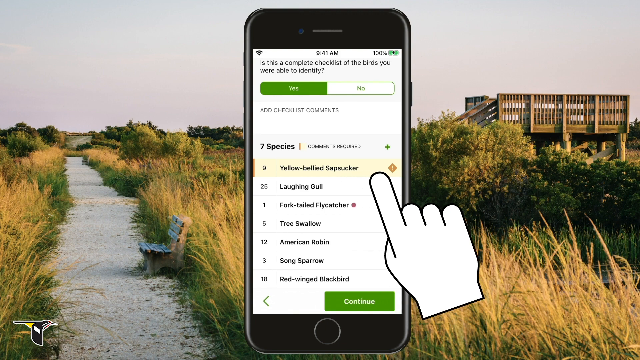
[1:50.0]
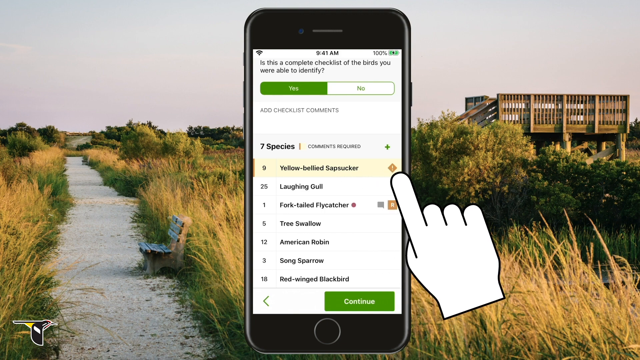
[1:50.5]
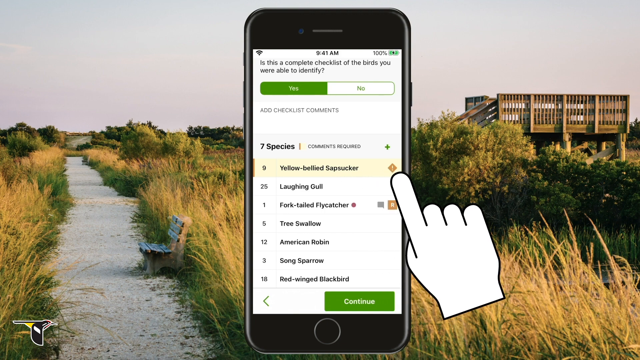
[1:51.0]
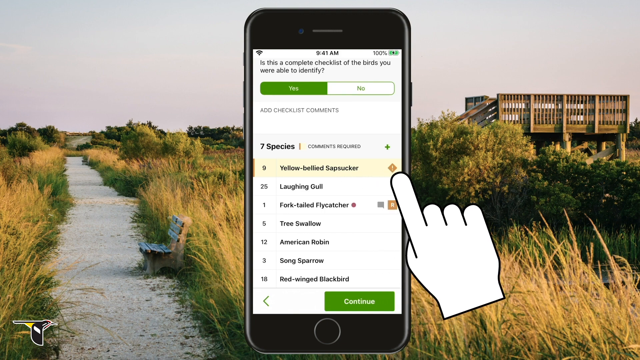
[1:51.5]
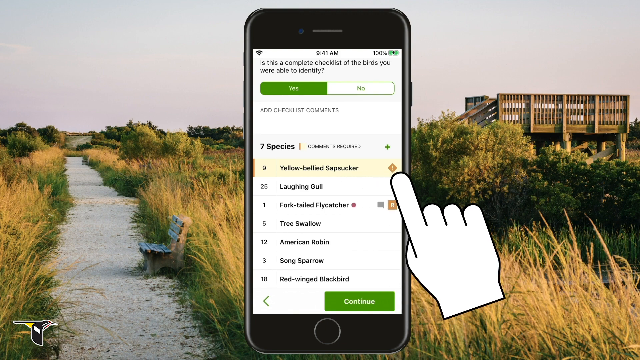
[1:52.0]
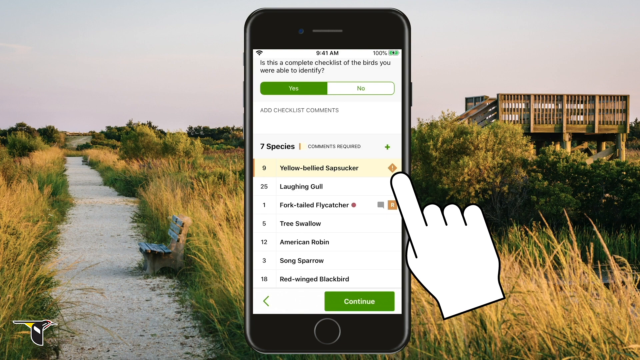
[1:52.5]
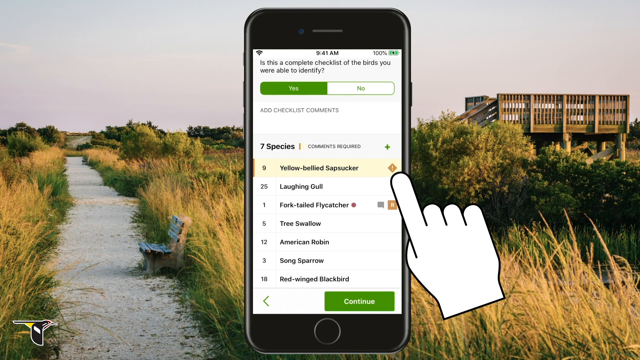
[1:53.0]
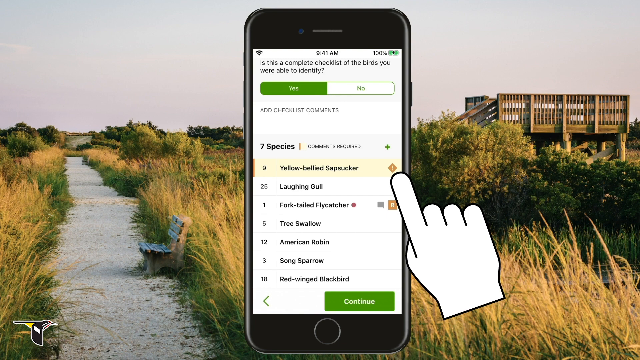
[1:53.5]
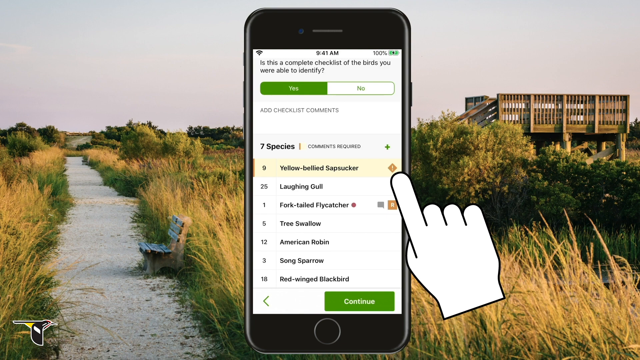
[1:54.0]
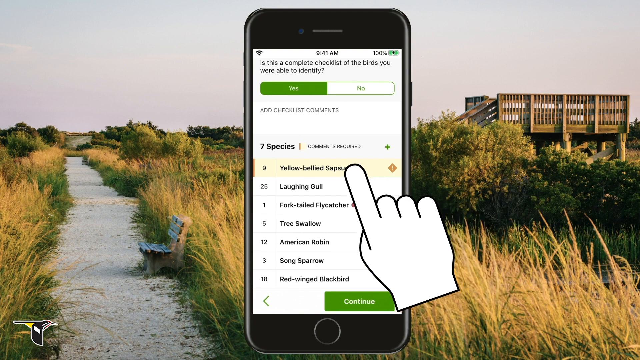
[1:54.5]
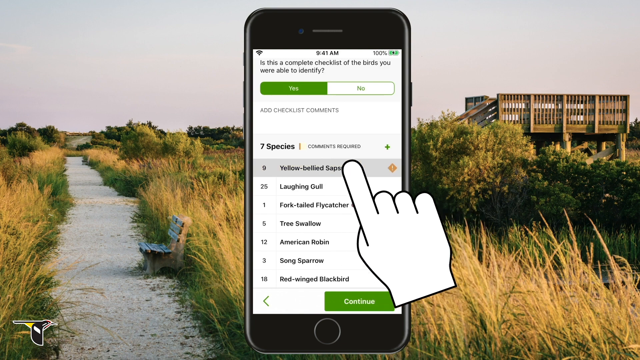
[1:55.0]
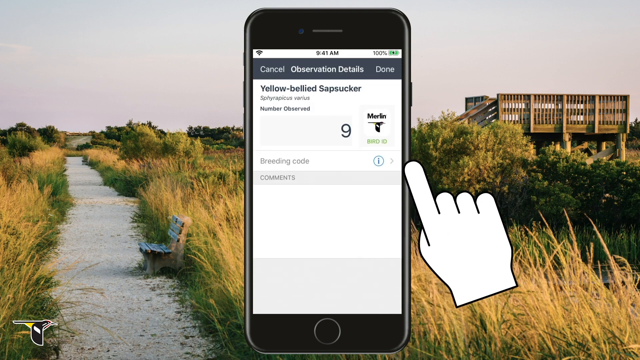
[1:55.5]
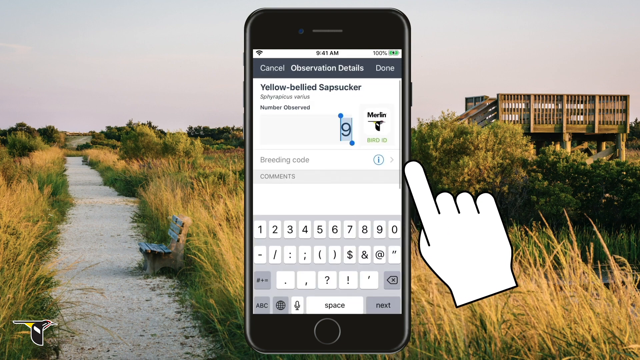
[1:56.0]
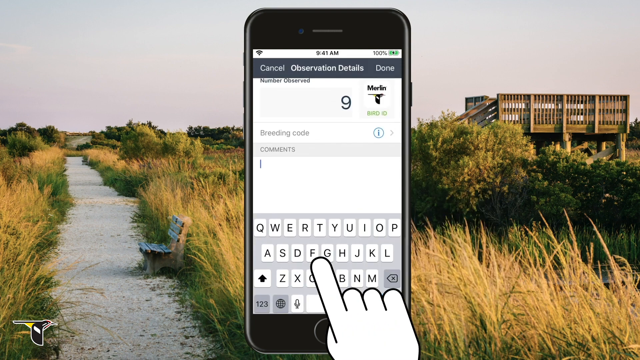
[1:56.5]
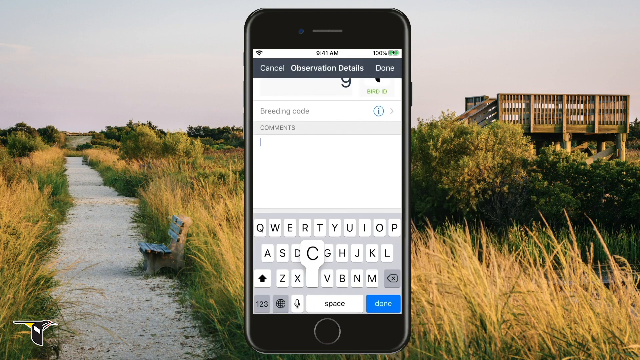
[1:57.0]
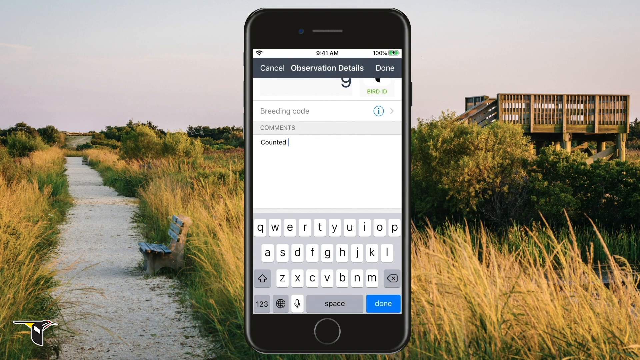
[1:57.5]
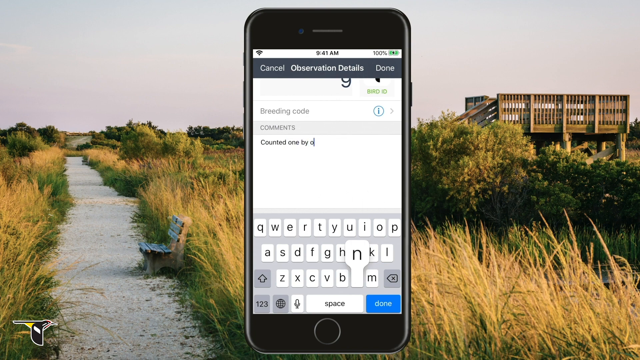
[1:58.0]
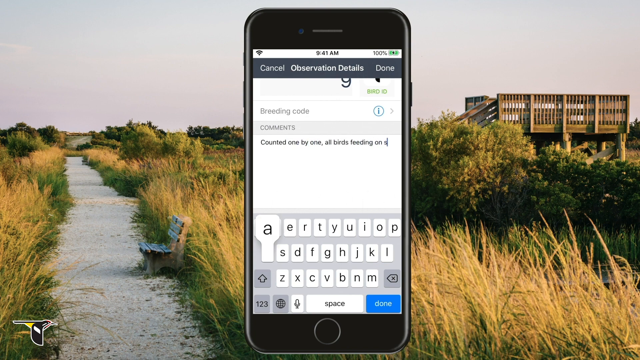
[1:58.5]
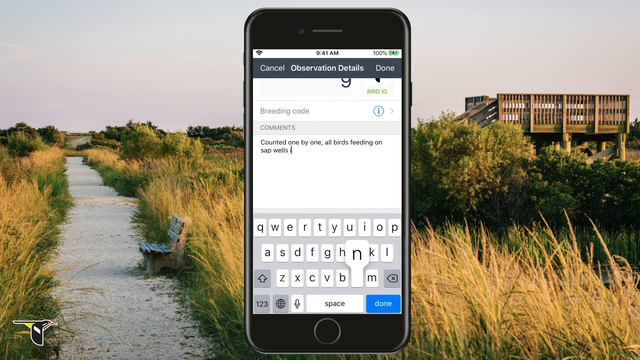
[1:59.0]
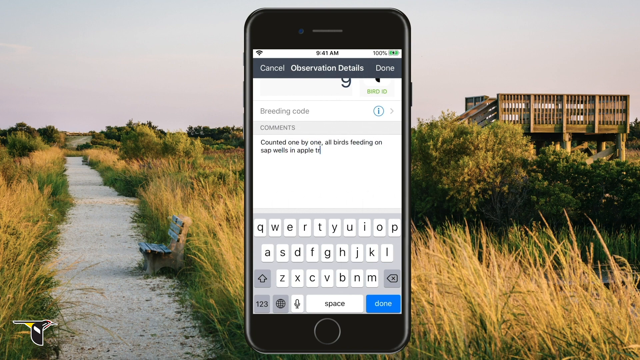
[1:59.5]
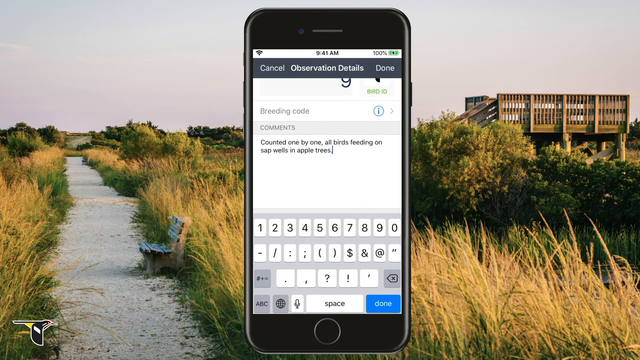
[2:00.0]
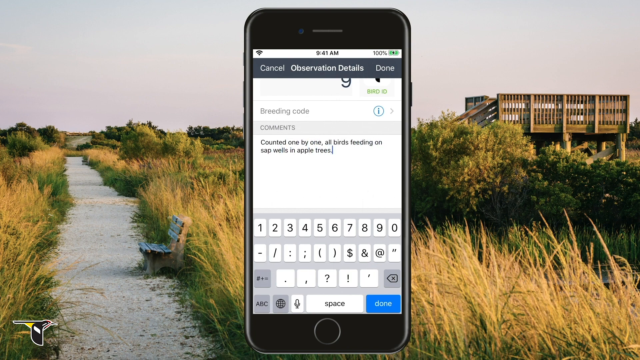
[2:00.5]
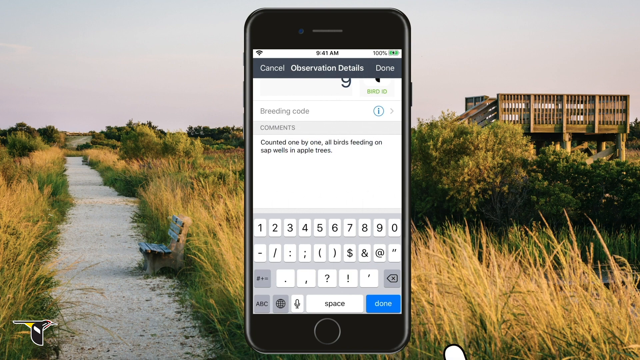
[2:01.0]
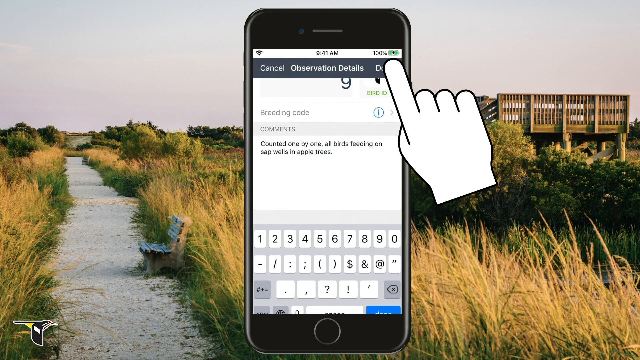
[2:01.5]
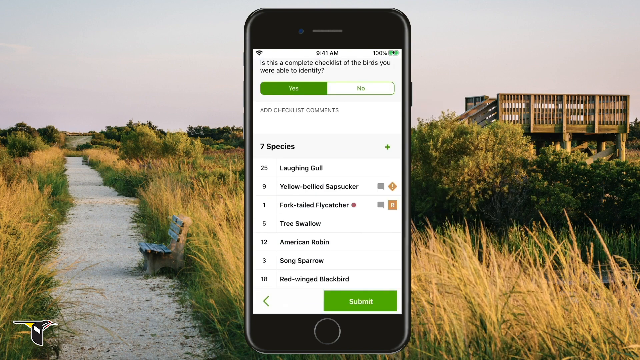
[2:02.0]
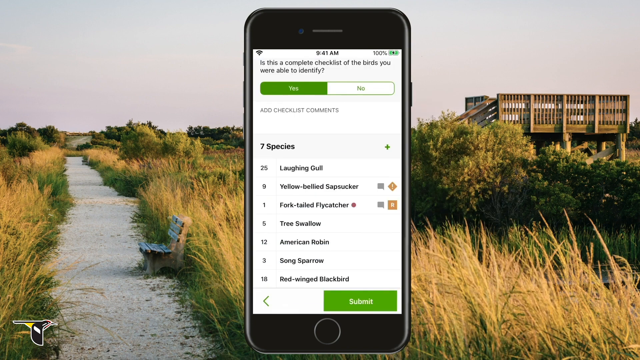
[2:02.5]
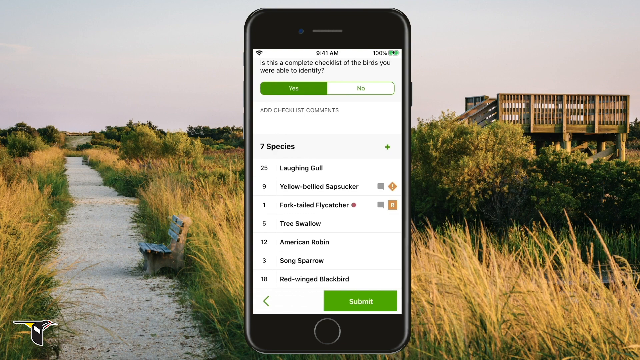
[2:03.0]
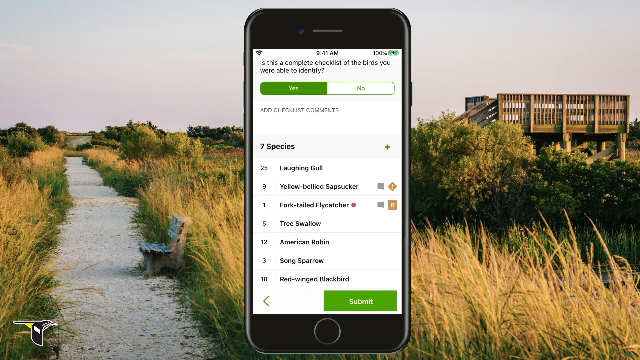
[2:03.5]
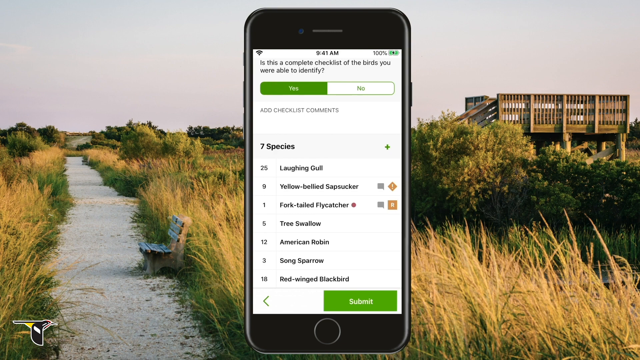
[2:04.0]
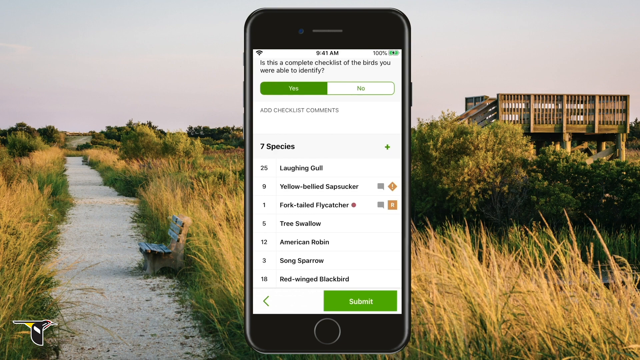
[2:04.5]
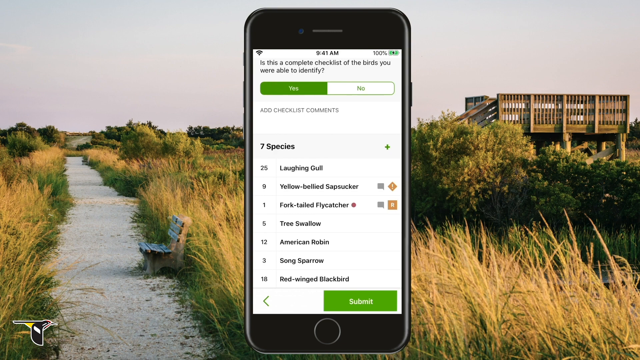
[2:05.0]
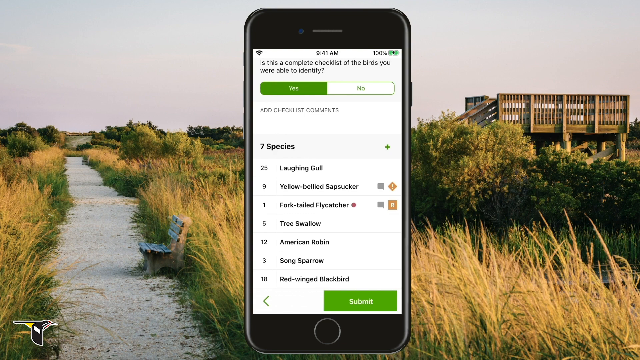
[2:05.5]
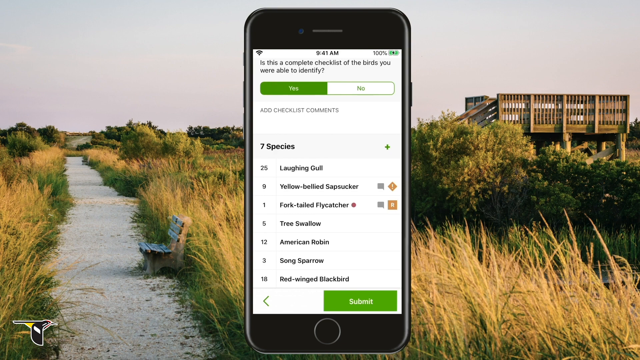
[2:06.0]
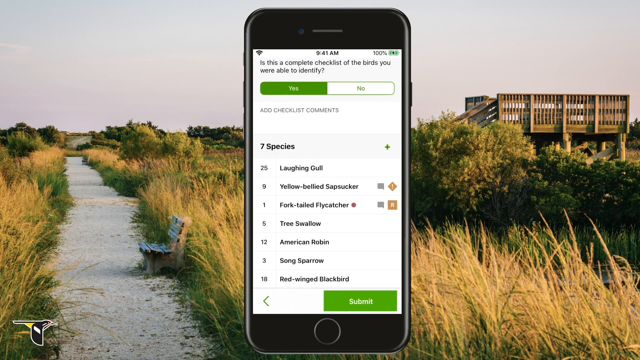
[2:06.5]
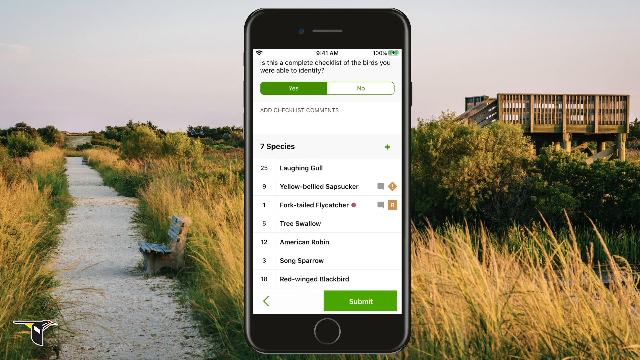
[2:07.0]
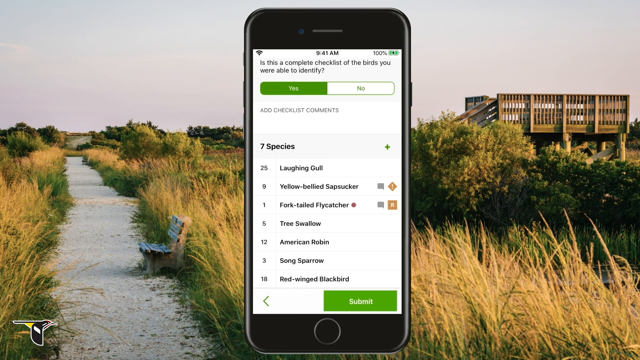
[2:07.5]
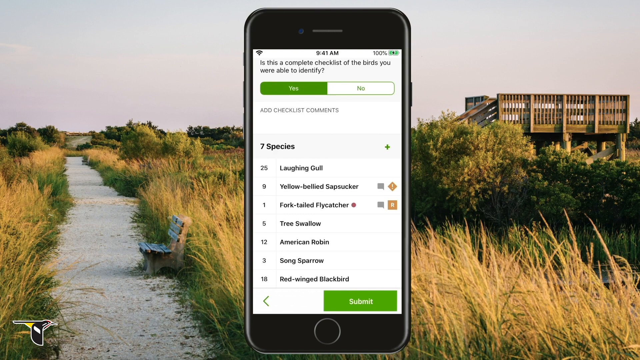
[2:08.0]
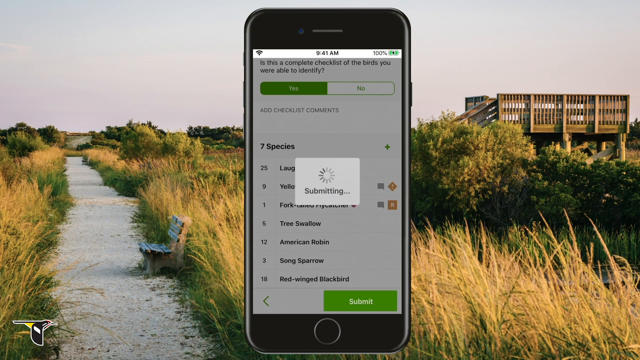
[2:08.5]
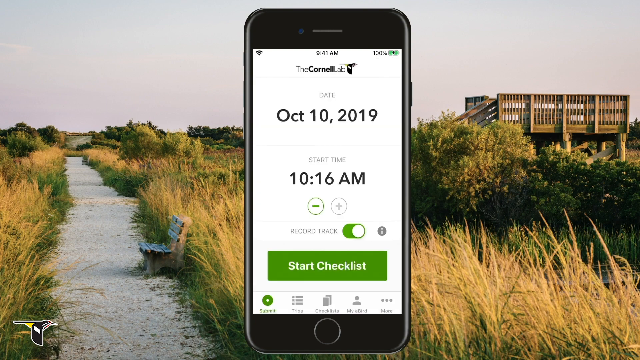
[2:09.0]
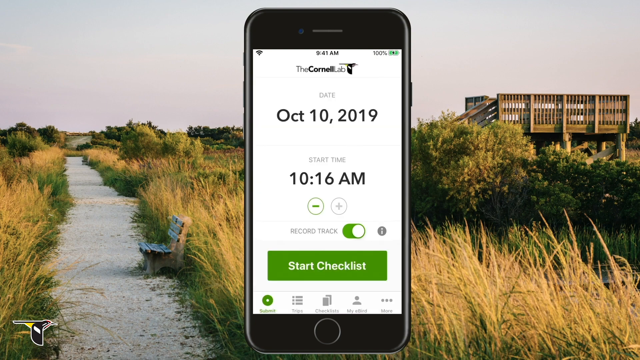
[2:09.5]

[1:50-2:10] The app operation continues. A white cartoon hand selects the yellow-bellied sapsucker from the species list, and the observation details screen opens for another observation. Under yellow-bellied sapsucker, the number observed is nine. The cartoon hand selects the comments area, and the comment "counted one by one, all birds feeding on sap wells and apple trees" is entered. The comments area is closed, apparently some further work is done in the app, and the view returns to the main homepage of the application, which says "Cornell lab" at the top, shows the date of the observation and the start time, says "record track", and has a large button that says "start checklist". The cartoon hand then selects yellow-bellied sapsucker, and the comments screen shows the entered comments.